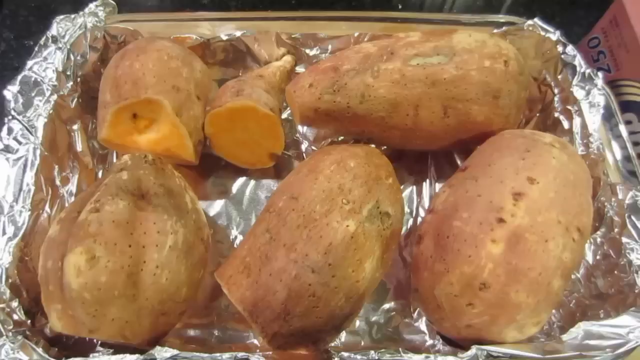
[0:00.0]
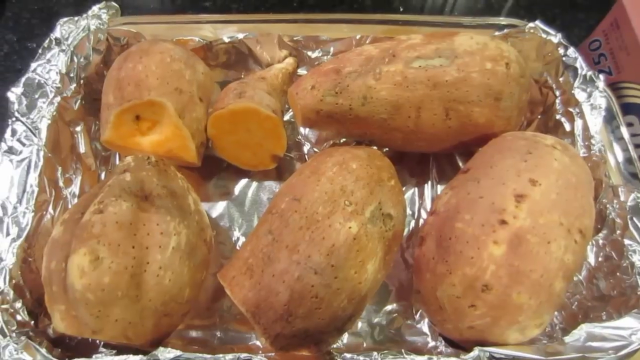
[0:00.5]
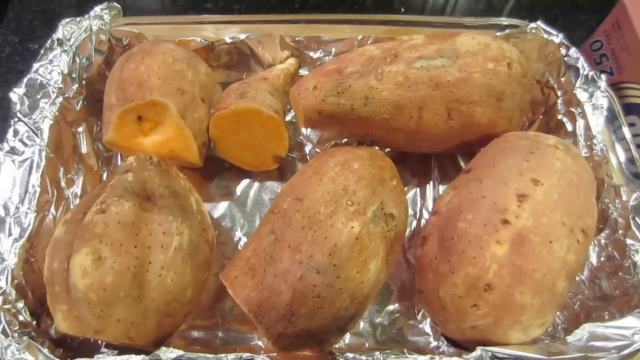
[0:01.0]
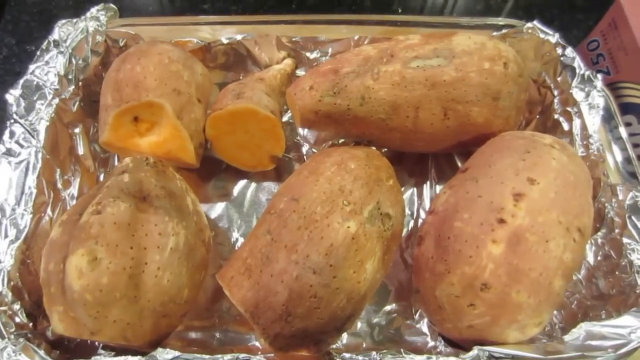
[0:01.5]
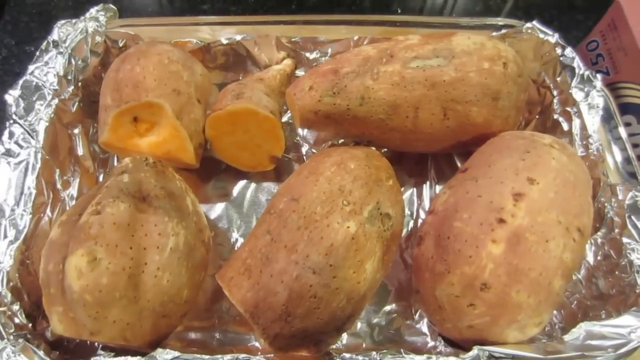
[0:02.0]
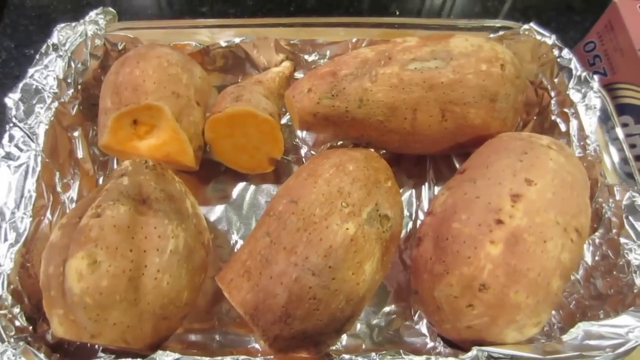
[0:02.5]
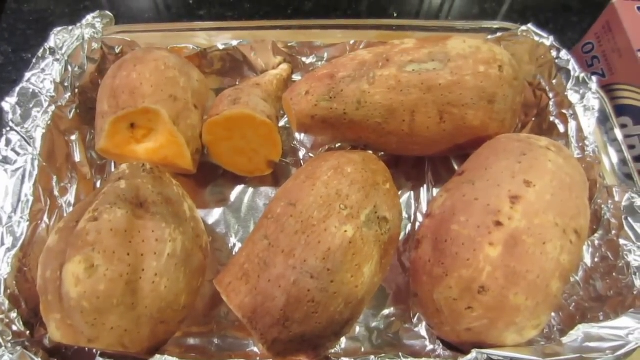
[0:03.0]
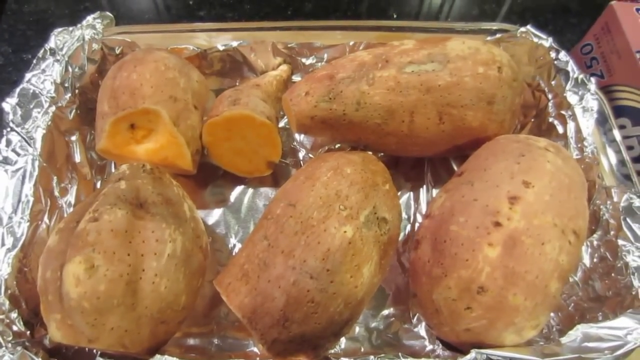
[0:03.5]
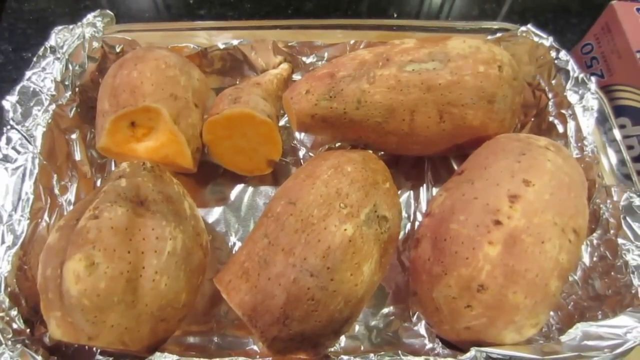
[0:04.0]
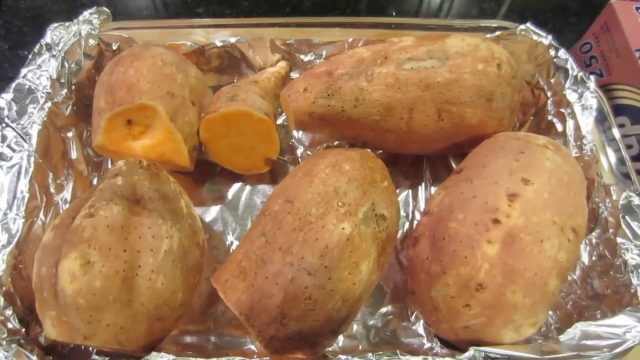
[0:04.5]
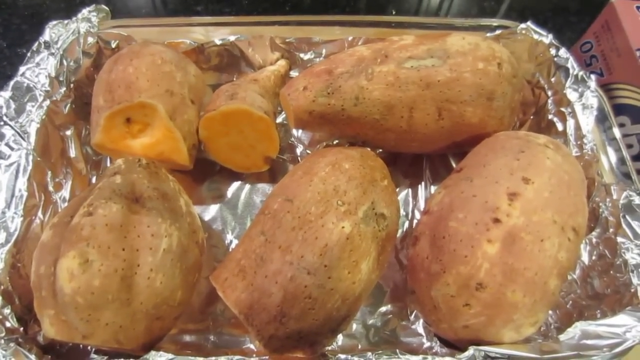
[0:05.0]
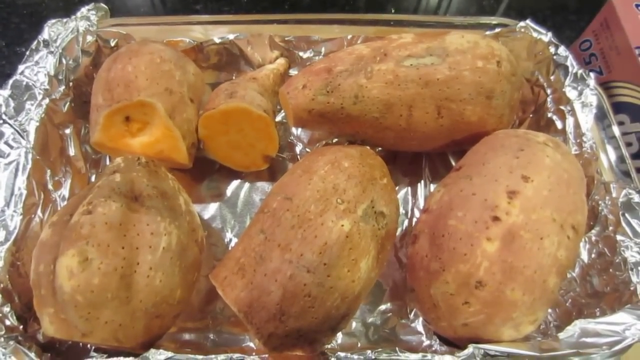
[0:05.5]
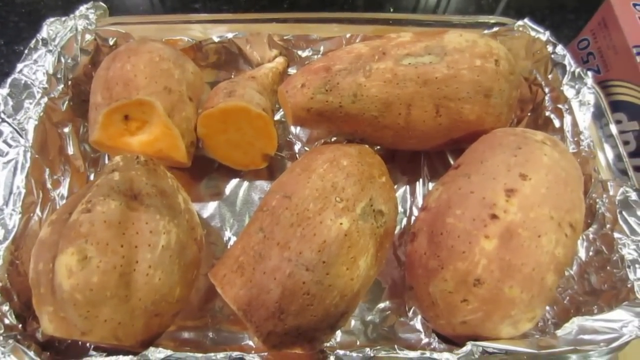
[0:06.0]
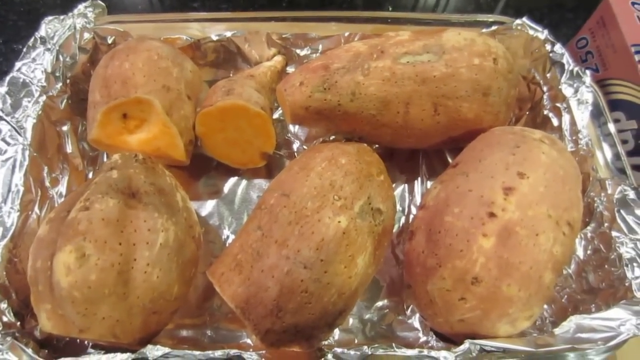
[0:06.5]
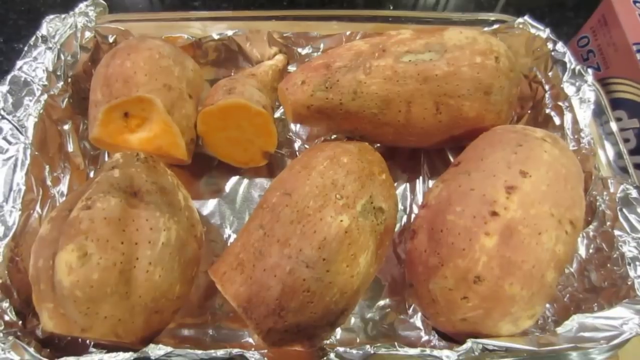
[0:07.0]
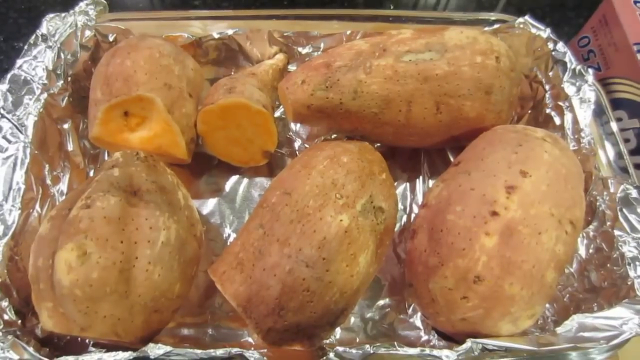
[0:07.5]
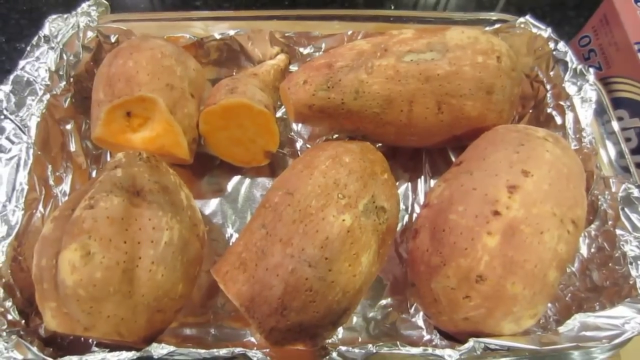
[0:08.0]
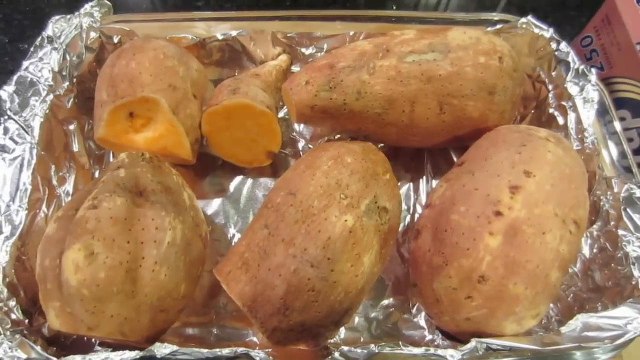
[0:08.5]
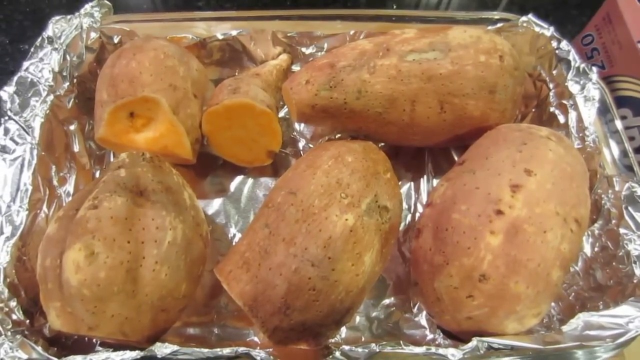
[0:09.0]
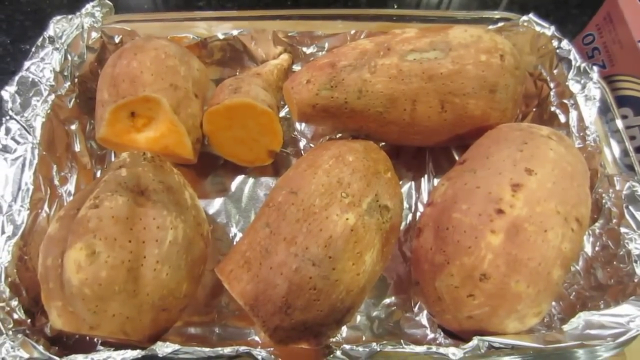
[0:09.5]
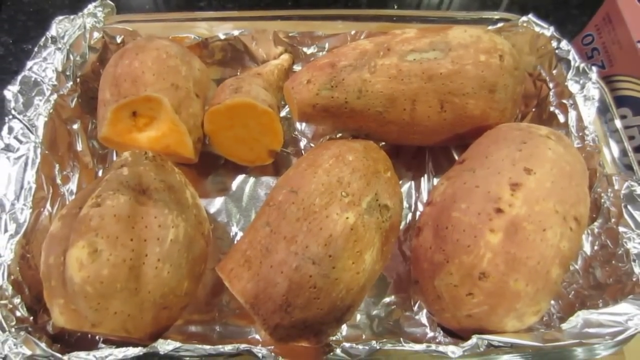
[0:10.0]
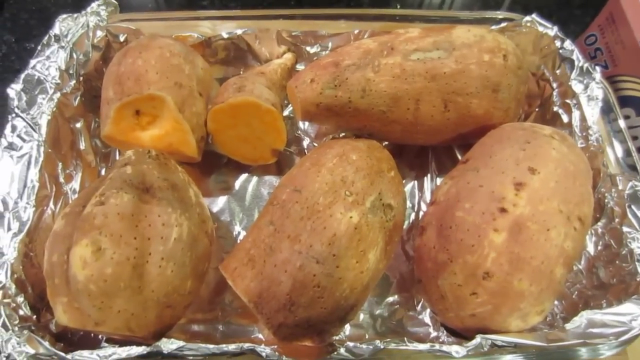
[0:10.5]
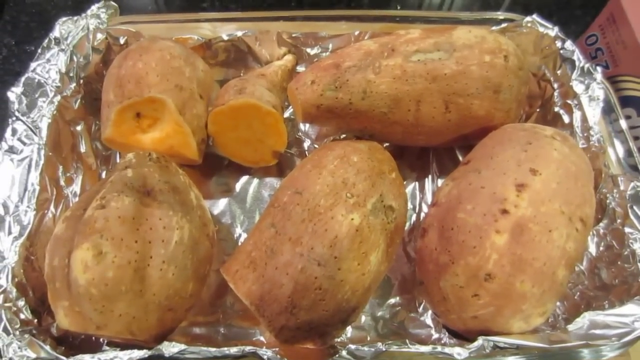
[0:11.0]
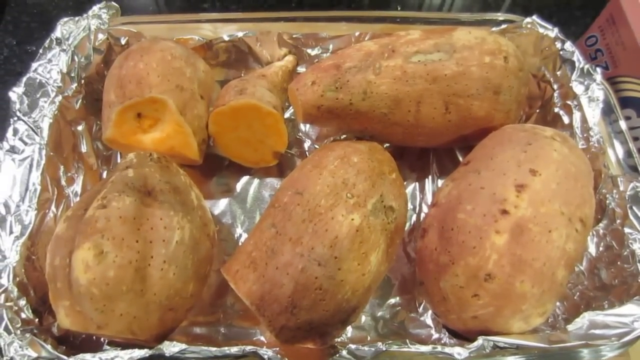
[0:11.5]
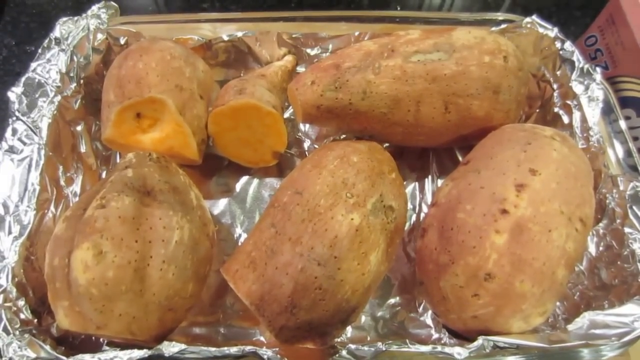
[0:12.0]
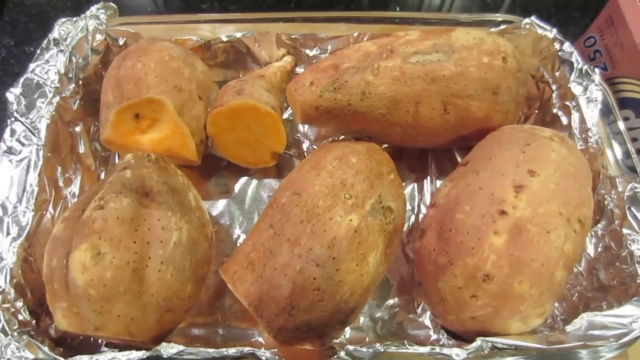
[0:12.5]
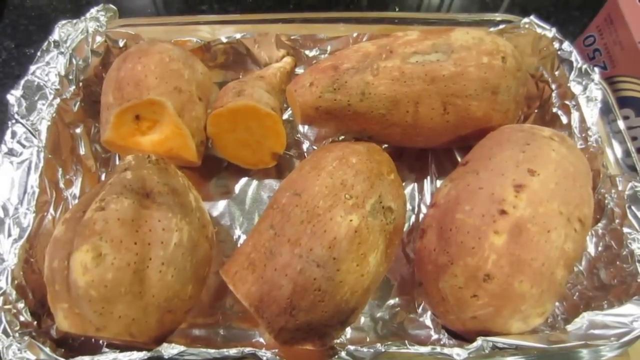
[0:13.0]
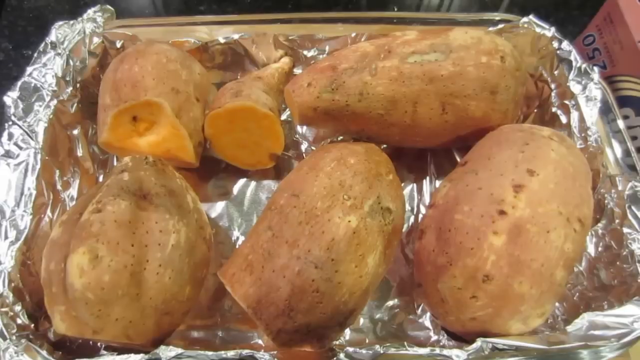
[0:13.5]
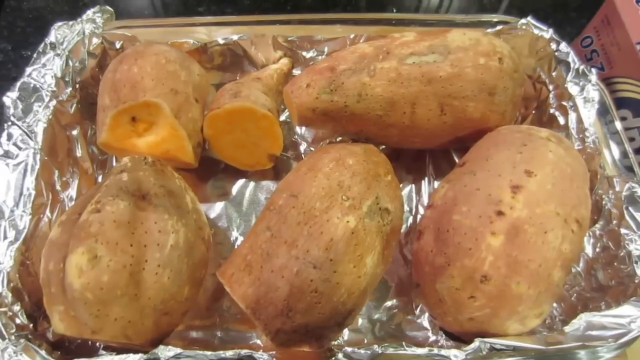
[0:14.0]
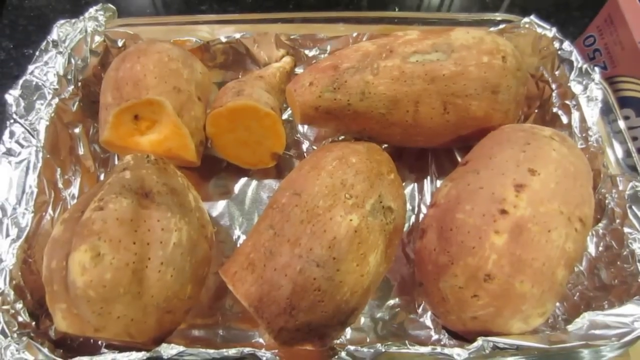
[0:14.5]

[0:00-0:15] Six sweet potatoes are seen from the top down in a deep glass oven dish lined with aluminum foil. They appear to have been punctured with a bunch of tiny holes on top that look like little fork holes. All of the sweet potatoes appear to be either cut in half or to have their ends maybe cut off, and they appear to be very snugly placed together in the dish. They face different directions: the bottom three face up, the two on the left side of the top row face up, and one more on the top row faces horizontally. The camera moves back and forth slightly, as if held by a person's hands. The sweet potatoes all appear very large and fresh, though they all look uncooked.